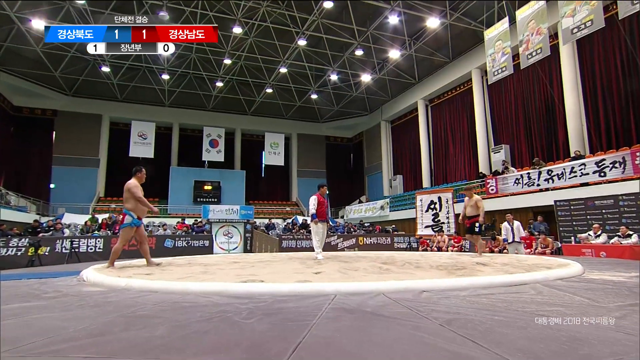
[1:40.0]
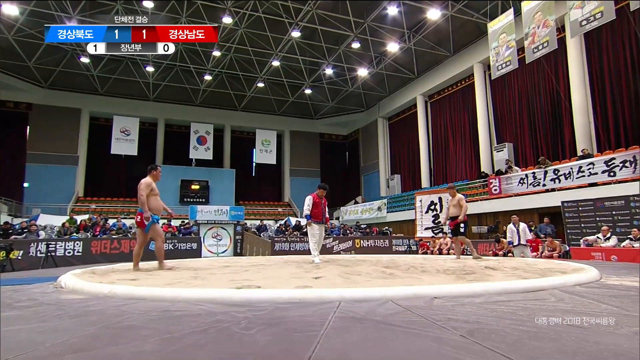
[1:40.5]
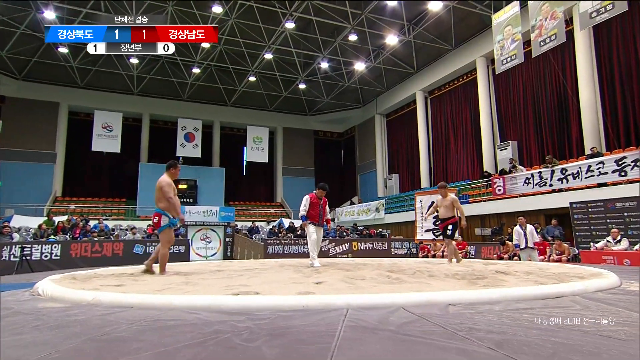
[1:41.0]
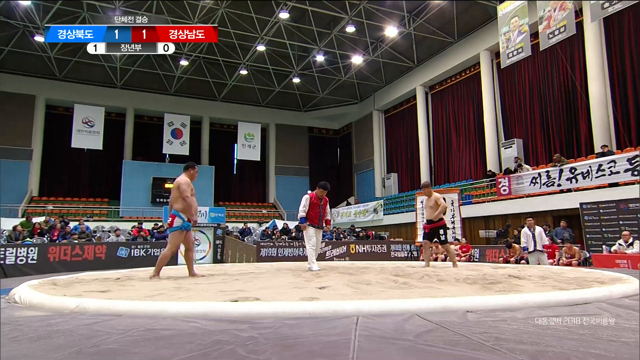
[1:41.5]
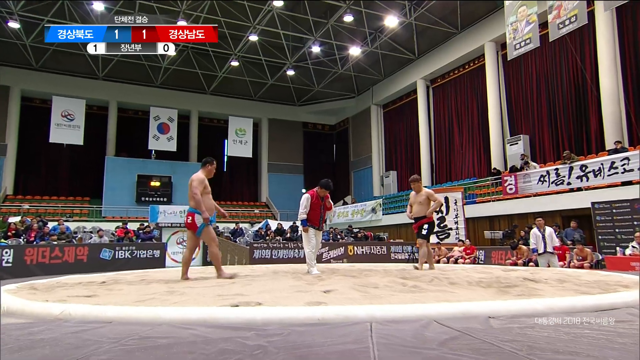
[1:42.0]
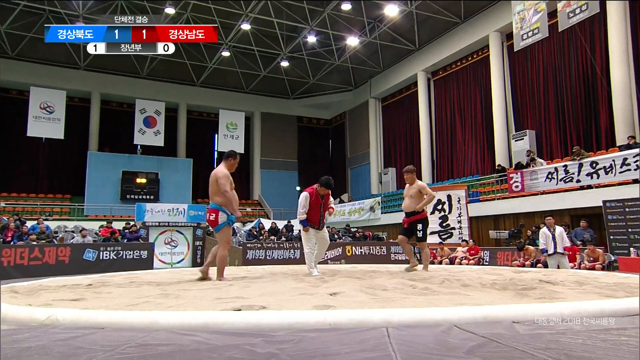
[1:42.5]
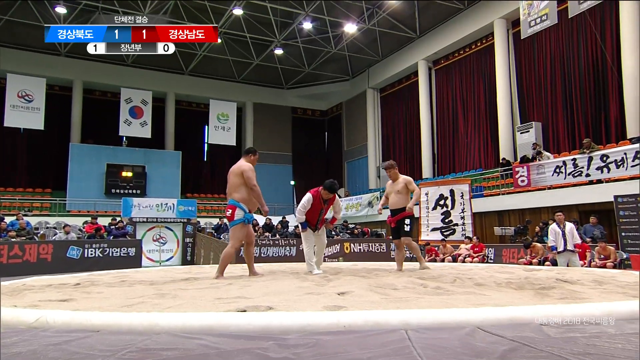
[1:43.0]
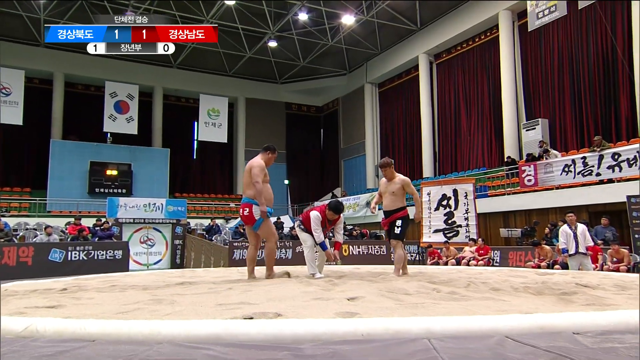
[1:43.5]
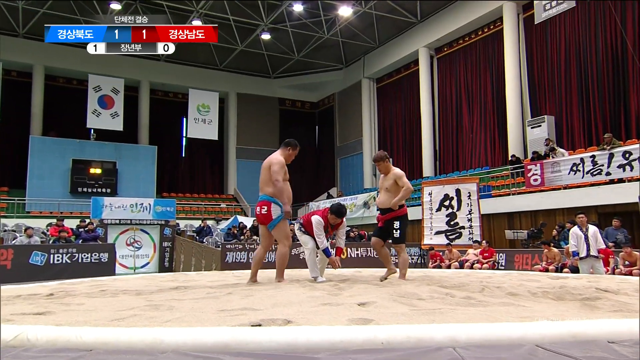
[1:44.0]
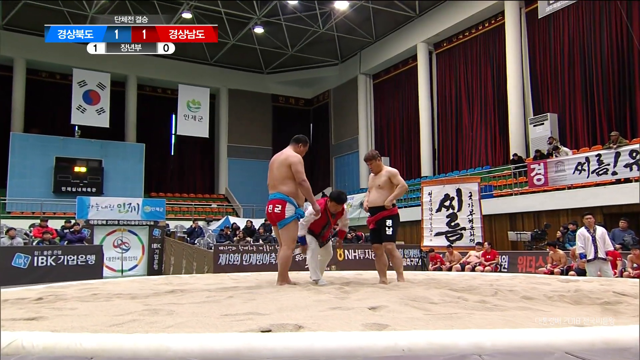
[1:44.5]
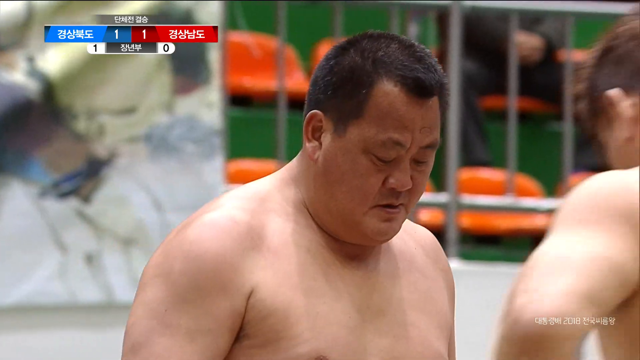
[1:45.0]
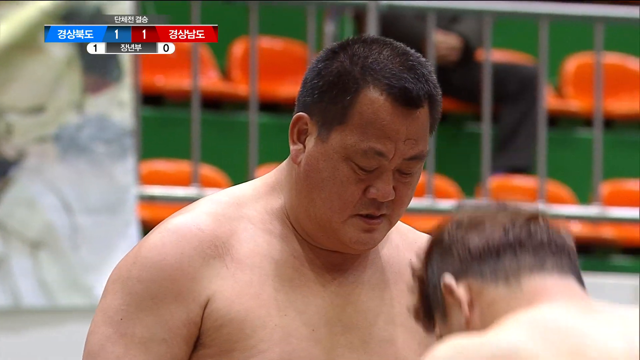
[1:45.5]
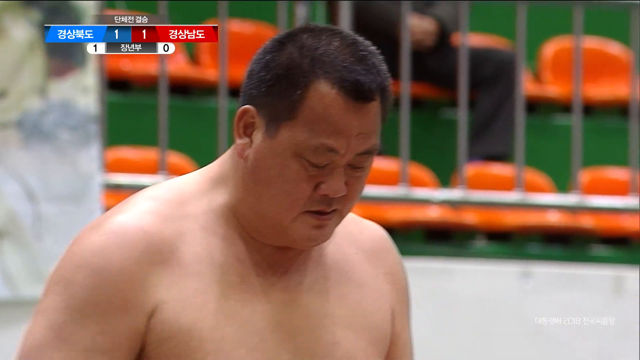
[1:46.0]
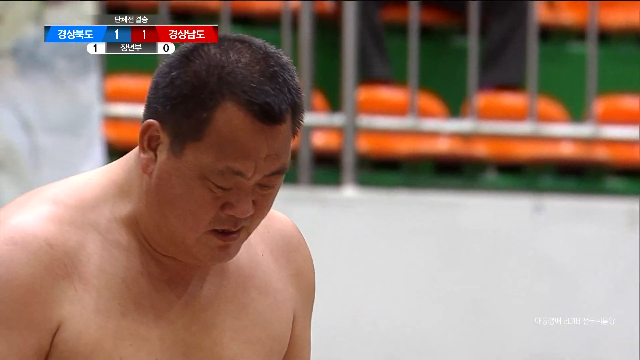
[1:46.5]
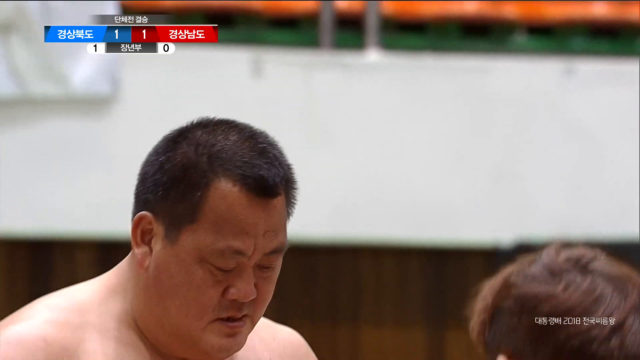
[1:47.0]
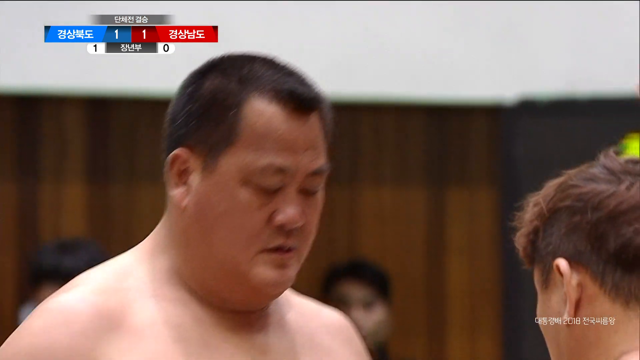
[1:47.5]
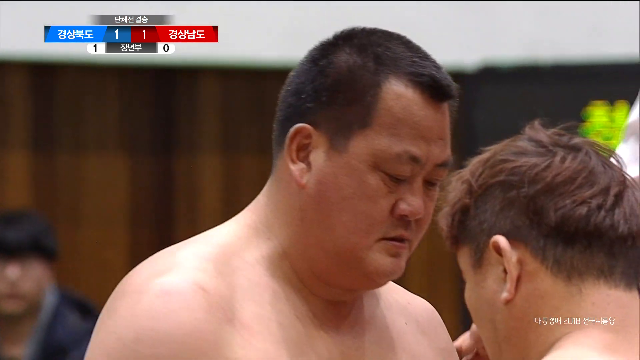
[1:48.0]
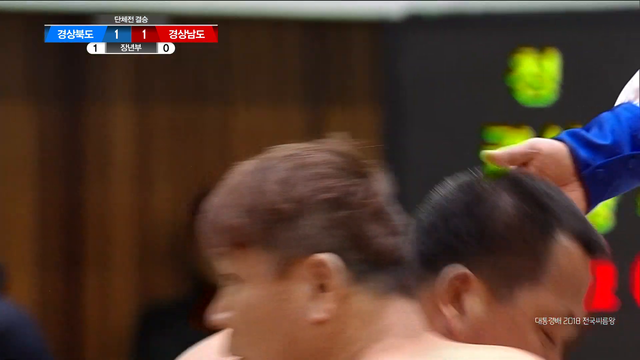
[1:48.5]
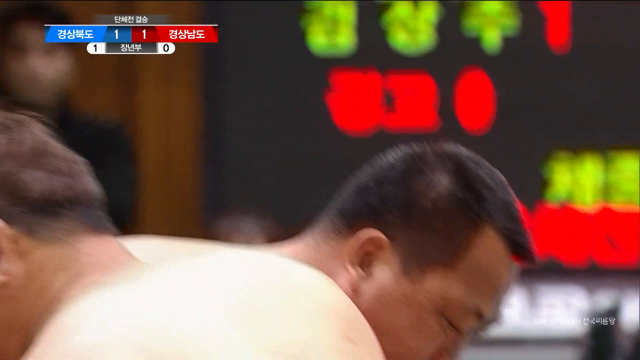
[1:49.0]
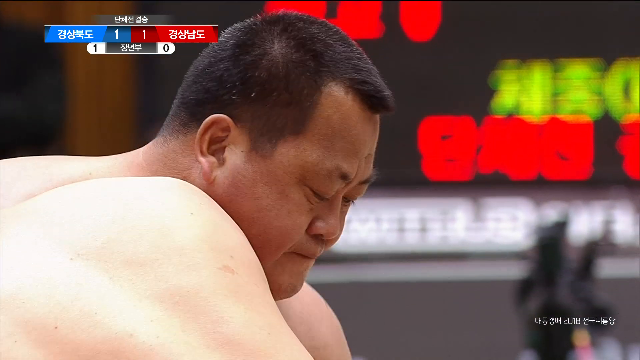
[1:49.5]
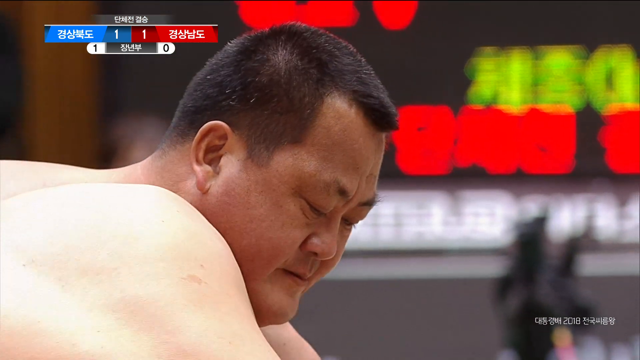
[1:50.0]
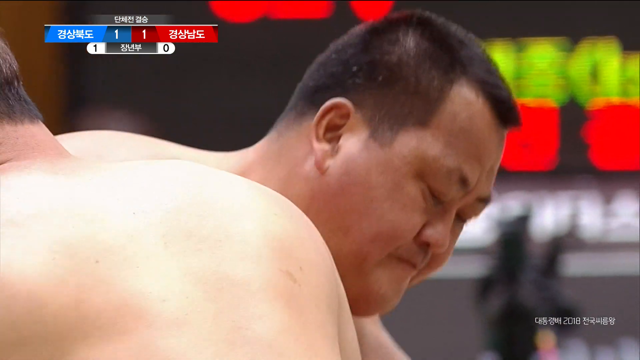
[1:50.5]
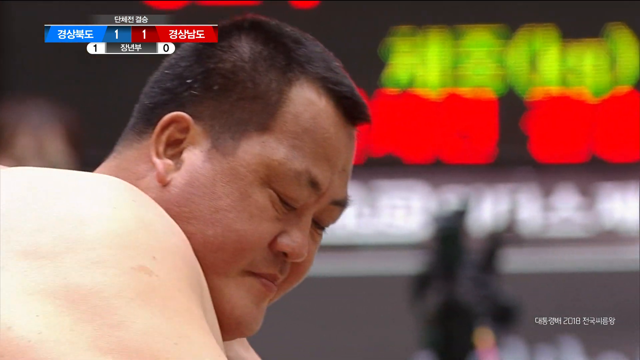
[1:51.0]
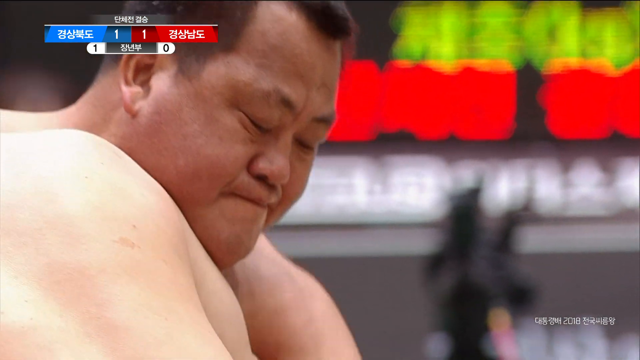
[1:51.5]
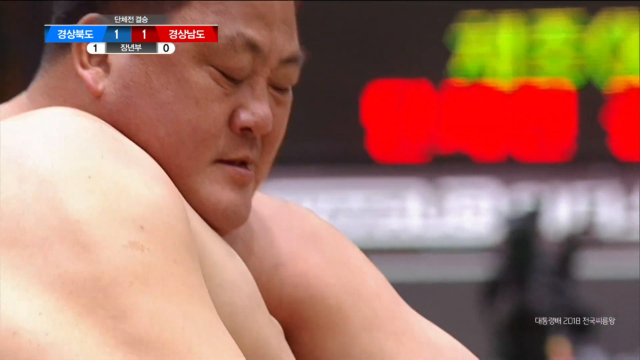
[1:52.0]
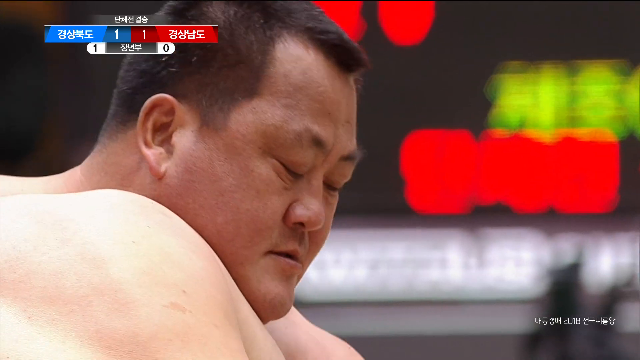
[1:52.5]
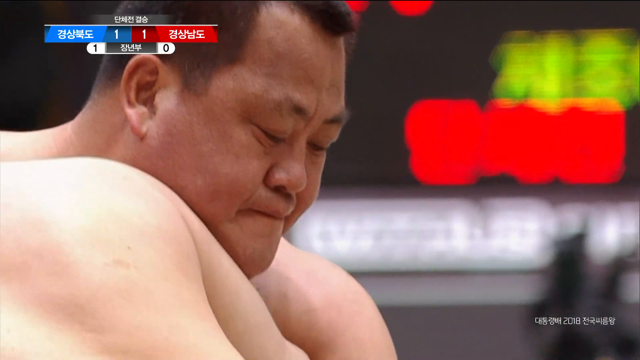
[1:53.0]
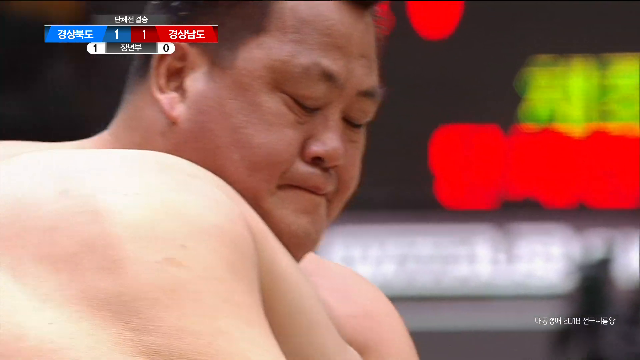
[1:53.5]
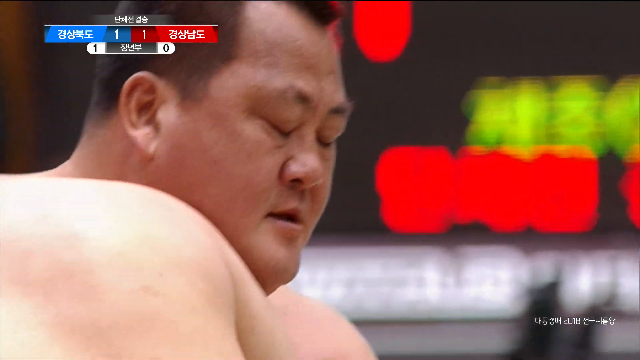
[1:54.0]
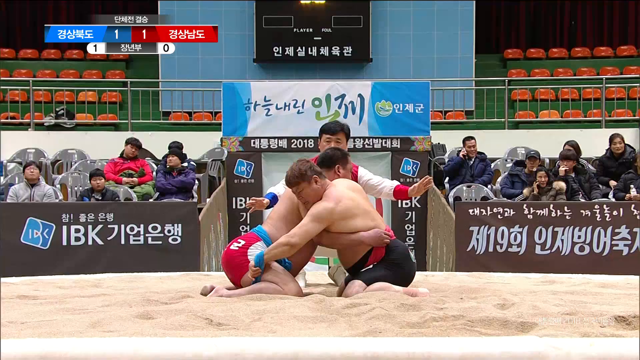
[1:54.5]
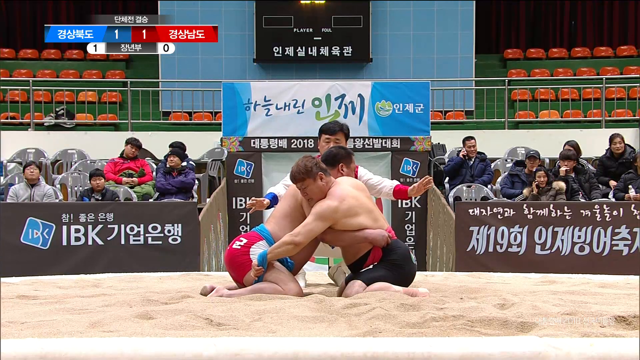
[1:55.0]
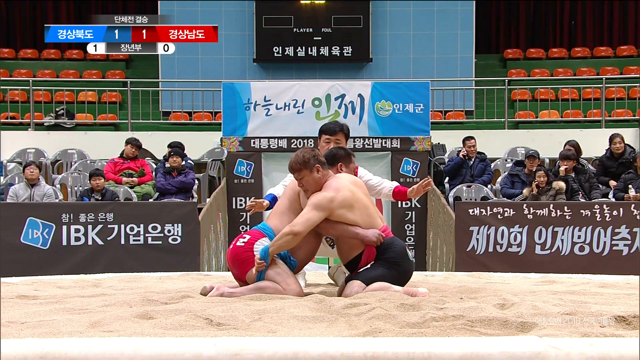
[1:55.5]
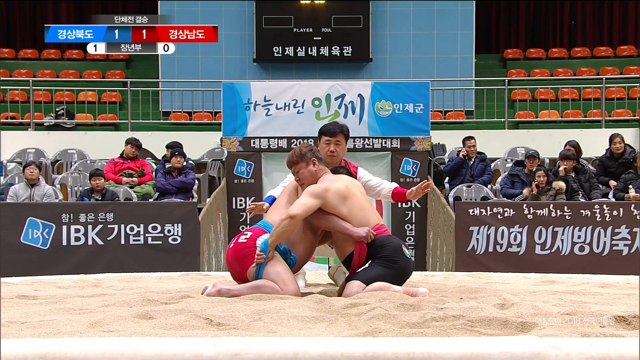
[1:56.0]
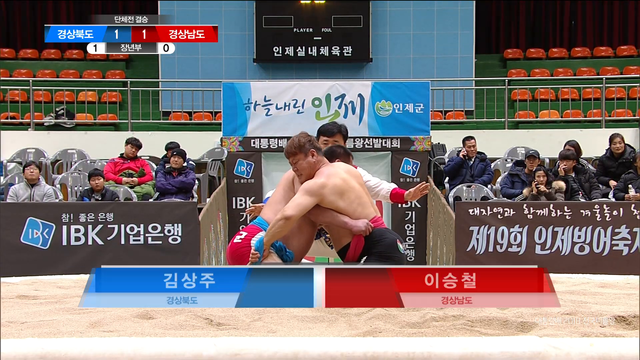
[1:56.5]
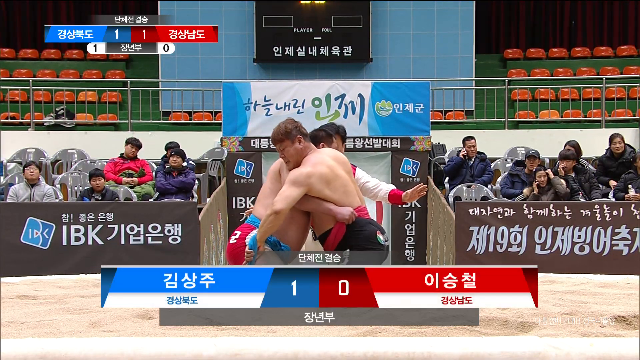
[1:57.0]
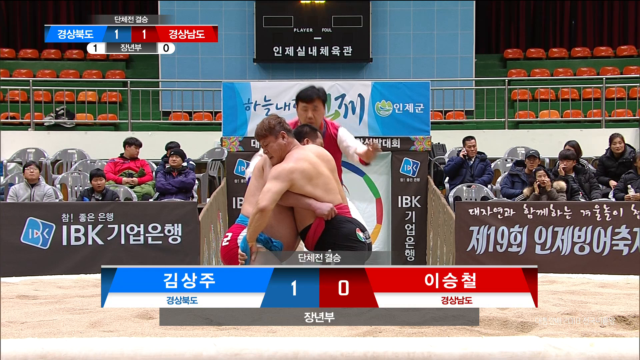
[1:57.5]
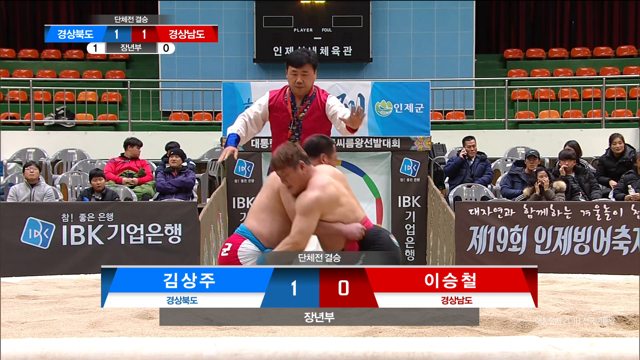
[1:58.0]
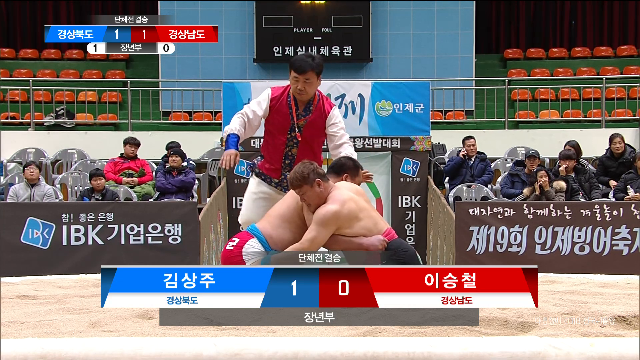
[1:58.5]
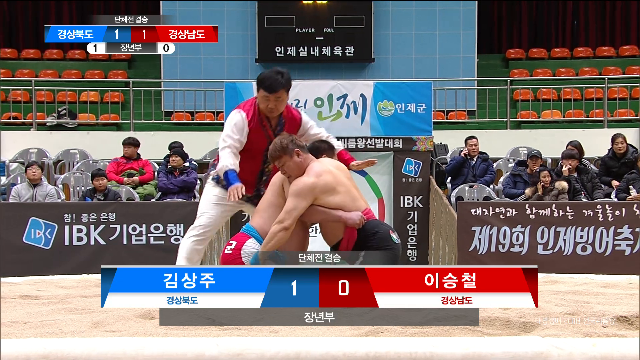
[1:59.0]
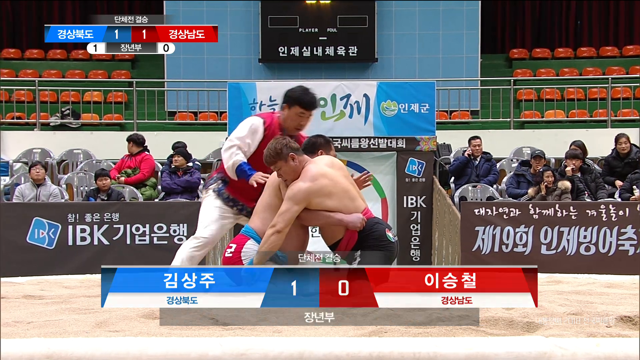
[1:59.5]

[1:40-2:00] The two wrestlers walk onto the sand circle while the referee stands in the middle, looking straight down at the ground as they approach each other. The referee reaches down towards the ground with his hands, as if pointing to where the men should line up. This looks to be the second round of their wrestling match. Both men, the same two as before, kneel in the sand and put their shoulders together so that their heads rest on each other's shoulders. A close-up shows one of their faces. In the lower right corner the year "2018" appears. They have grabbed each other's sashes, and the referee squats next to them with both arms out to the side. The referee has a red wristband on one arm and a blue one on the other, corresponding to the colour of the sash worn by the wrestler on each side.